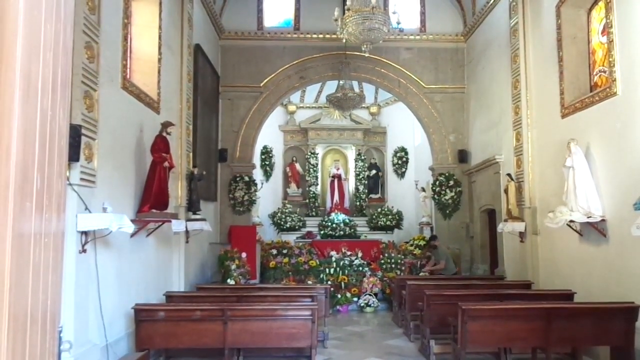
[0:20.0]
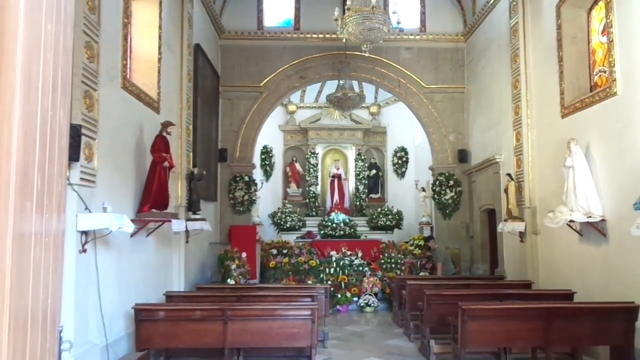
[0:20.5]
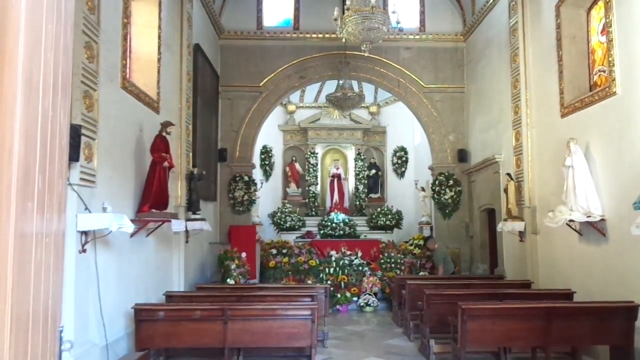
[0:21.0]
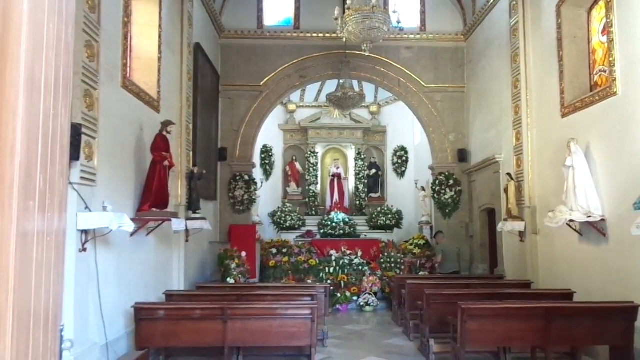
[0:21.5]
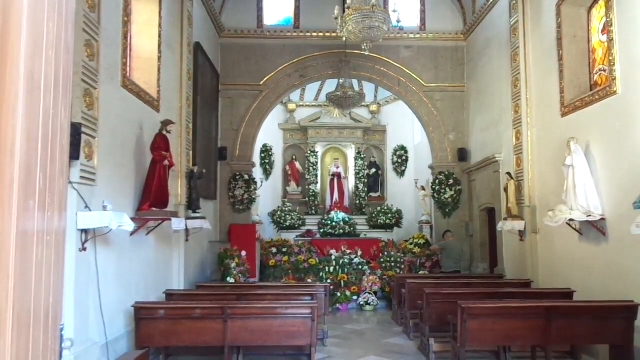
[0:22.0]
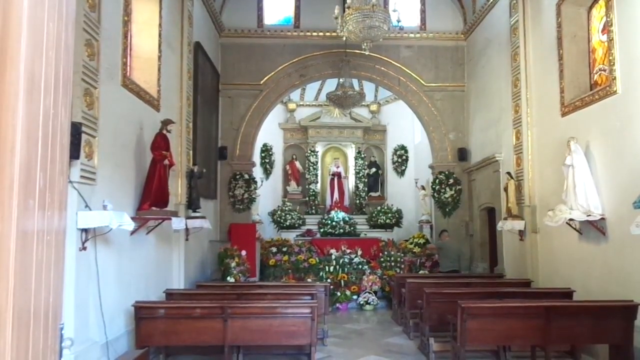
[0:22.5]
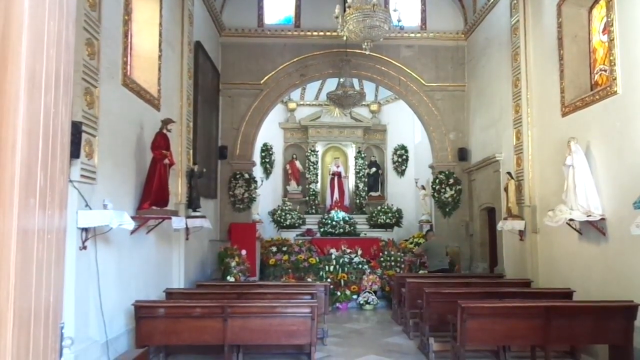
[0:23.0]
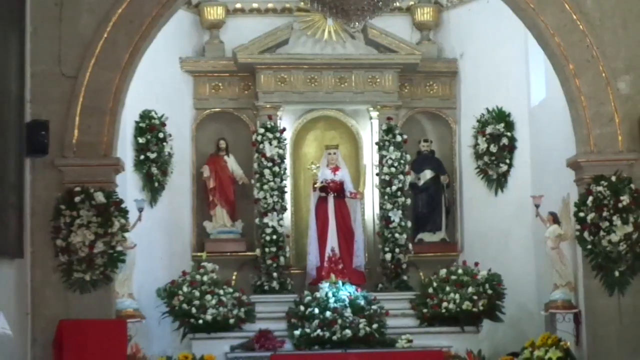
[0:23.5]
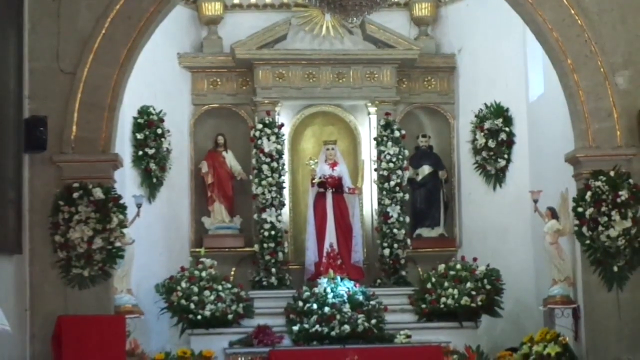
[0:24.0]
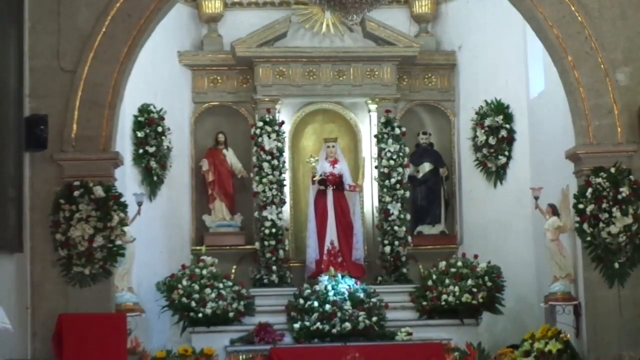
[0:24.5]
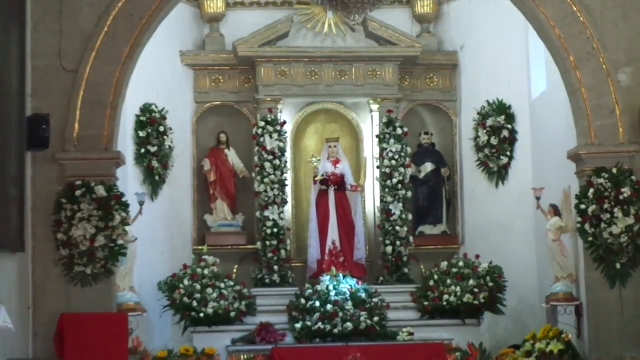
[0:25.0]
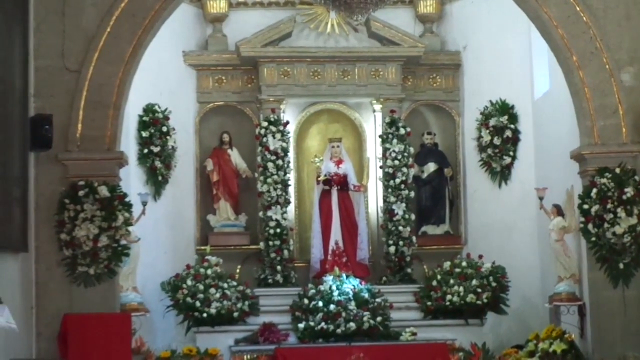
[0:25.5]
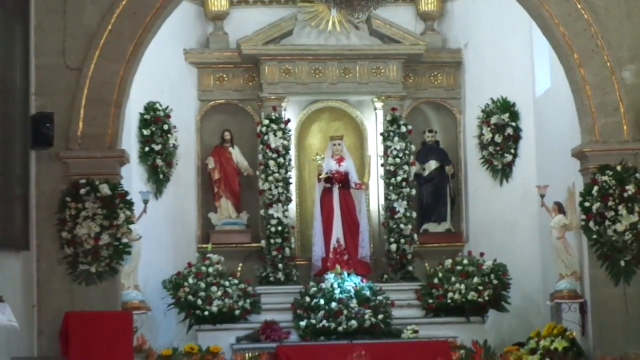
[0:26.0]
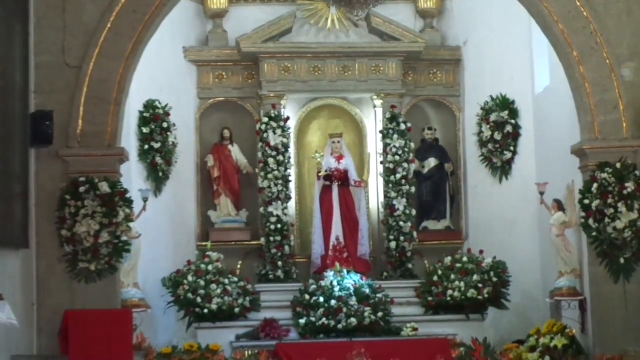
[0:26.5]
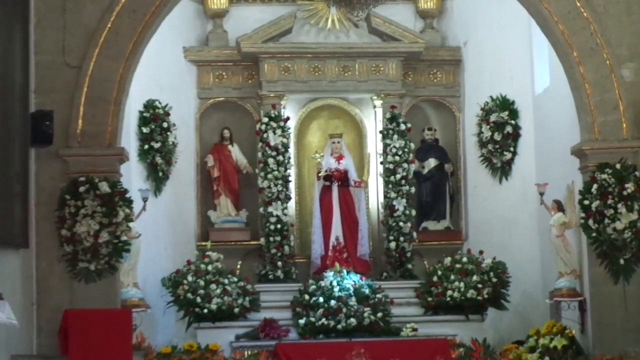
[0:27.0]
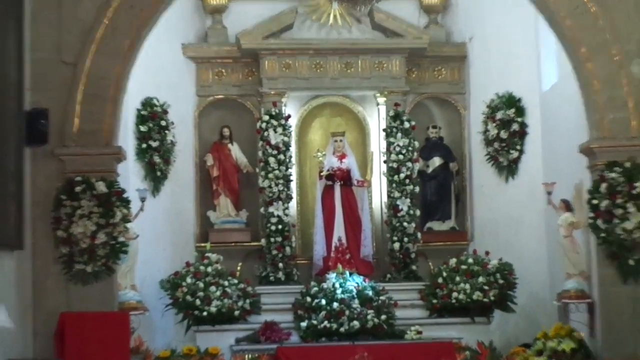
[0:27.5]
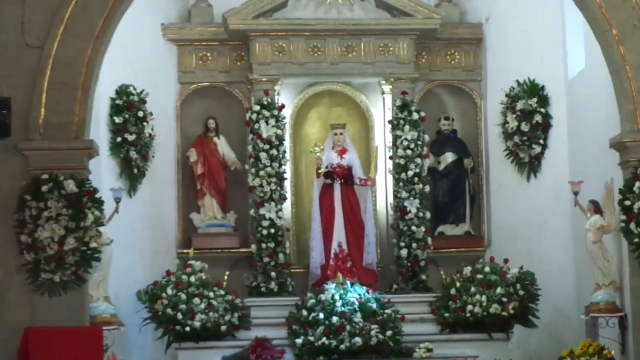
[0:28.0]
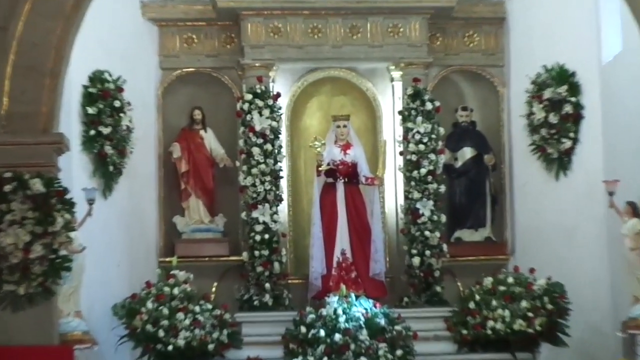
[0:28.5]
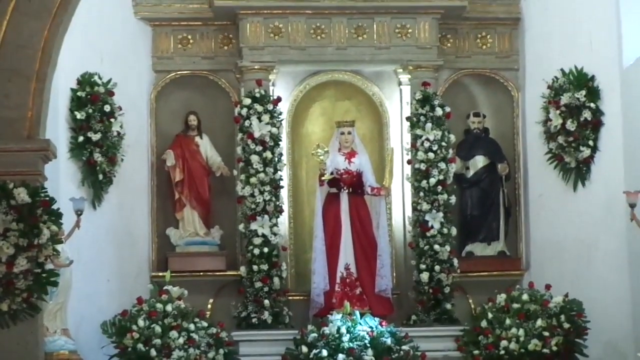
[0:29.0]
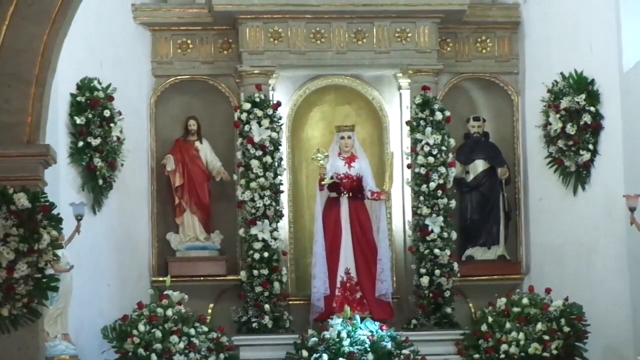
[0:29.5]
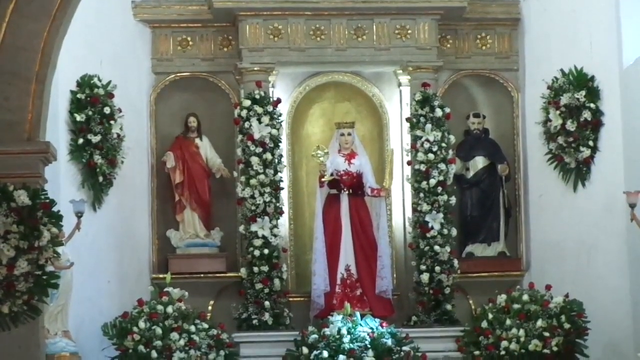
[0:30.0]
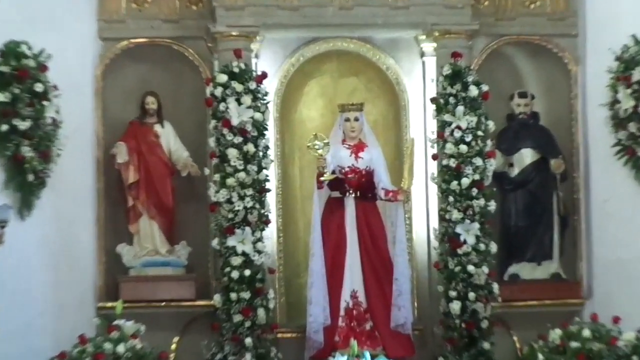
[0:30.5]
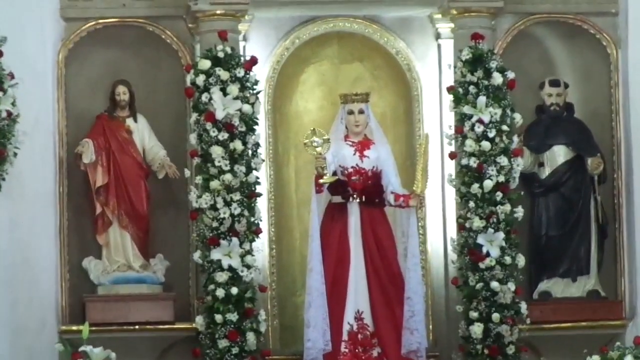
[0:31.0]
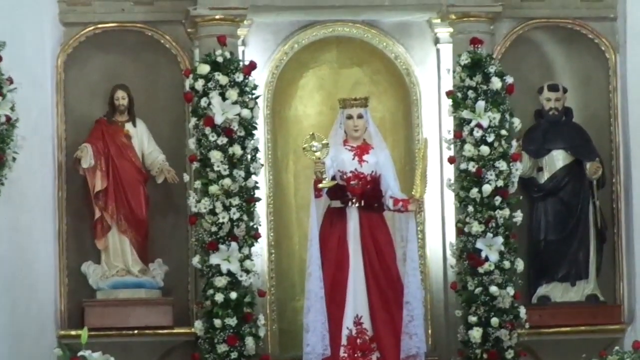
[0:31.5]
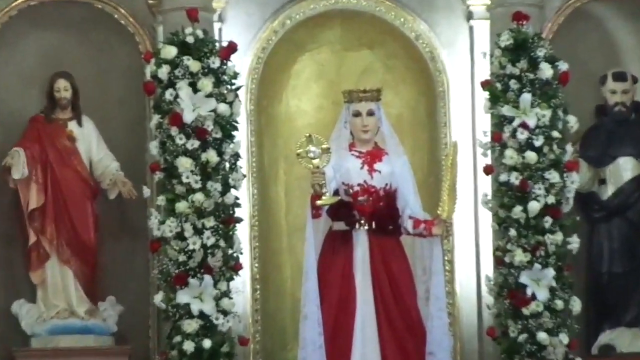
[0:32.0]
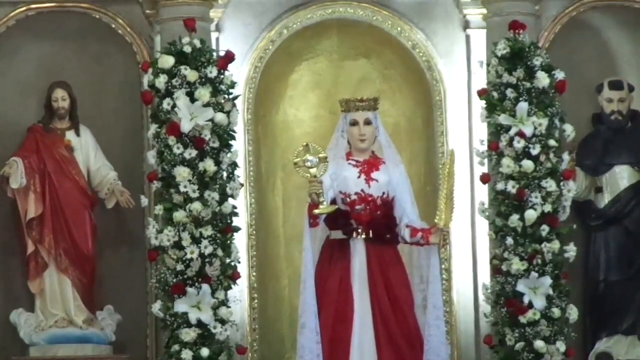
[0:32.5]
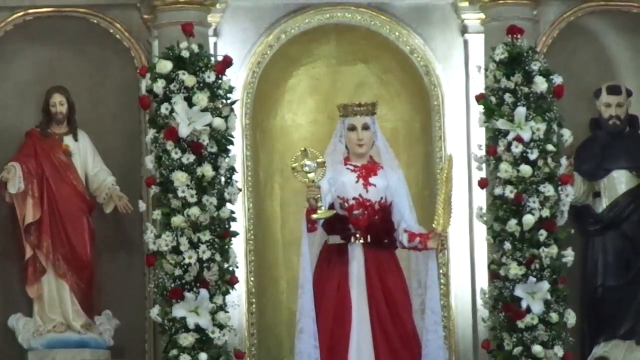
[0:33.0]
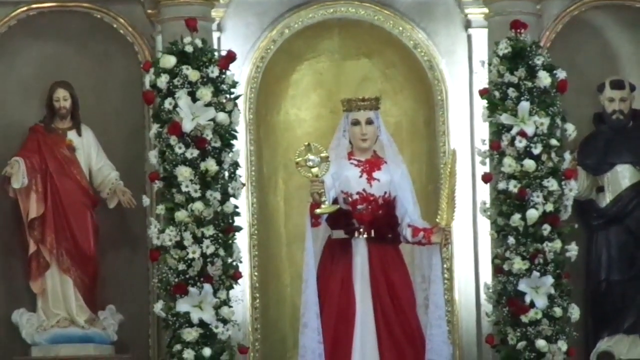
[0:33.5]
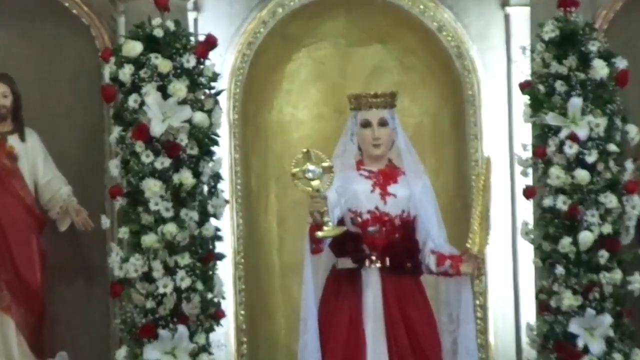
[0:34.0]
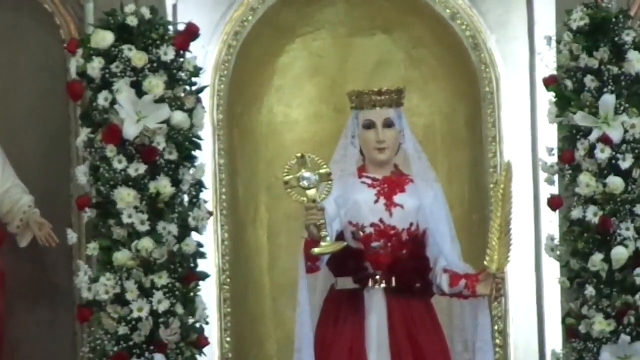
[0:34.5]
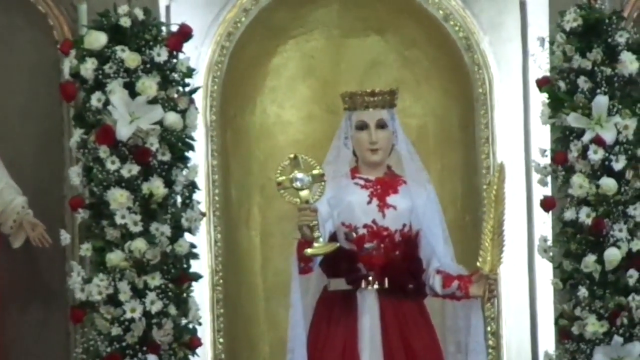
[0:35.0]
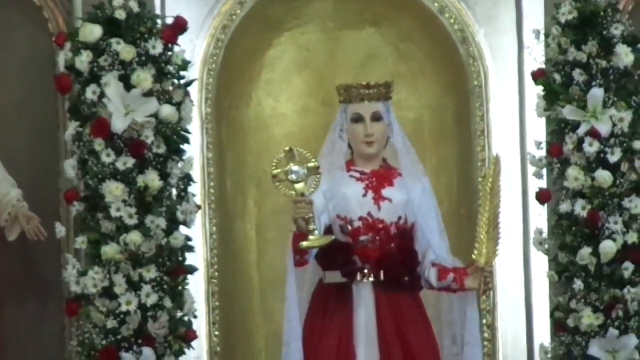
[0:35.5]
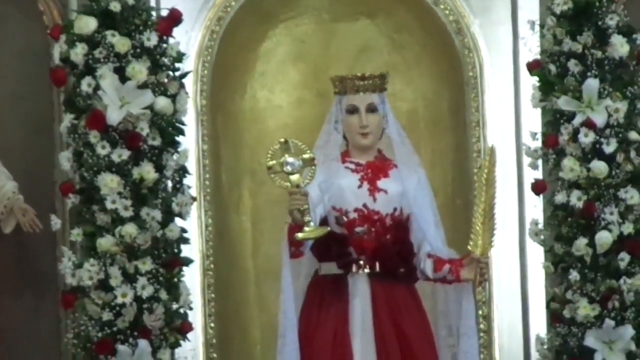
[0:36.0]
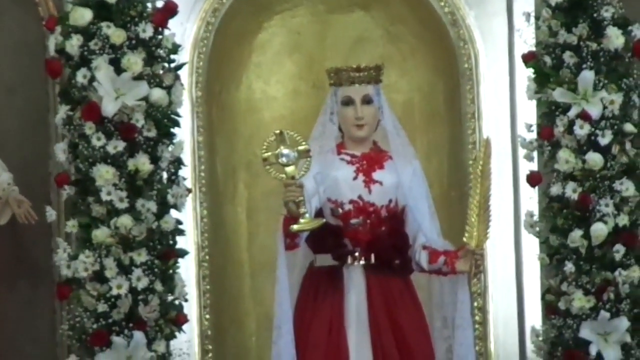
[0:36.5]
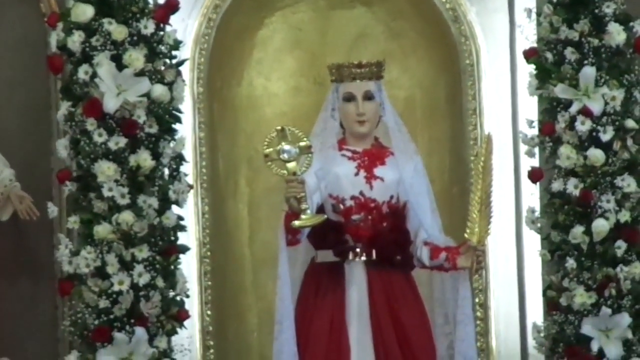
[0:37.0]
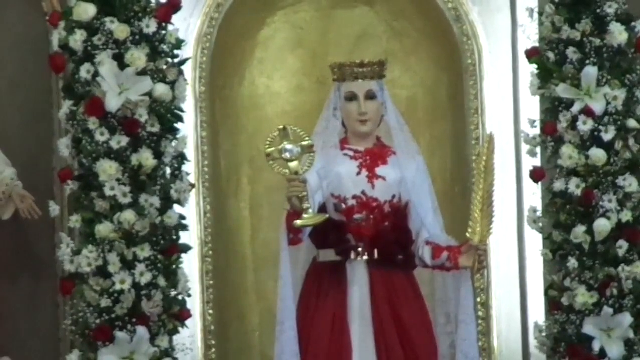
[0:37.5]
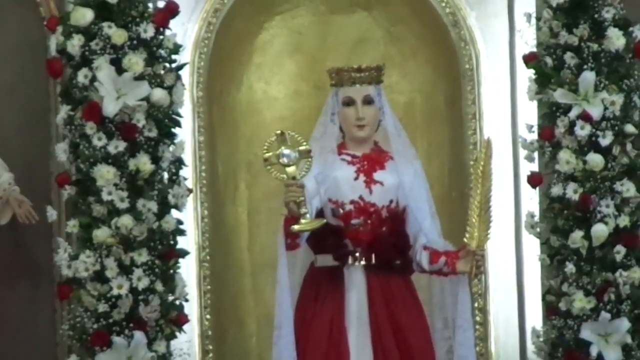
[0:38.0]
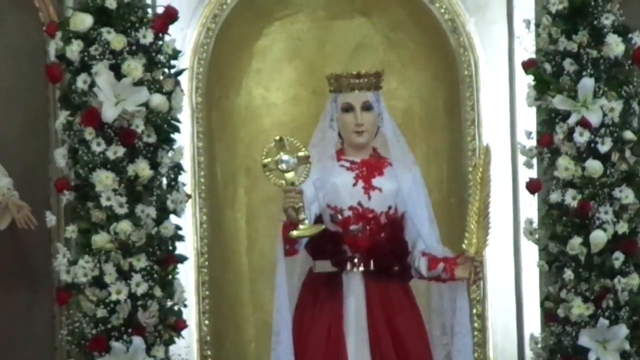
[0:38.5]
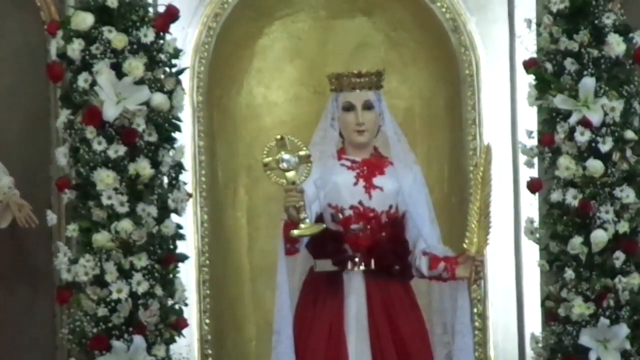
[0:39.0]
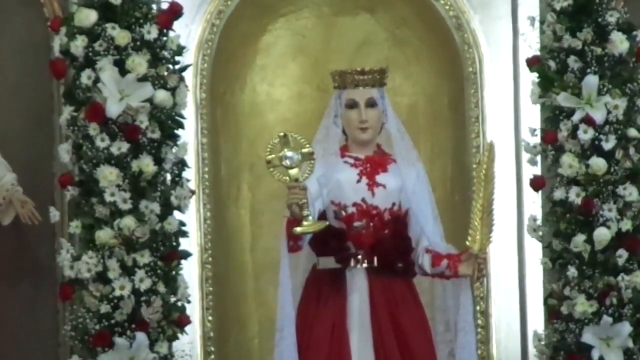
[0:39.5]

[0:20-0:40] The inside of a very small, unique little church has two rows of pews, maybe five in each row, and almost looks like it could be someone's living room. Small shelves on the walls on either side hold ornaments of religious figures such as Jesus and Mary. At the front, big floral pieces are on the altar, and kind of floral wreaths are attached to the walls. A big archway gives a slight separation between the altar area and the pews, so from the pews it almost looks like looking into a snow globe. The decoration is very neutral: the walls are white, with some feature cream, particularly in the wall with the arch, and there are some gold decorative pieces.